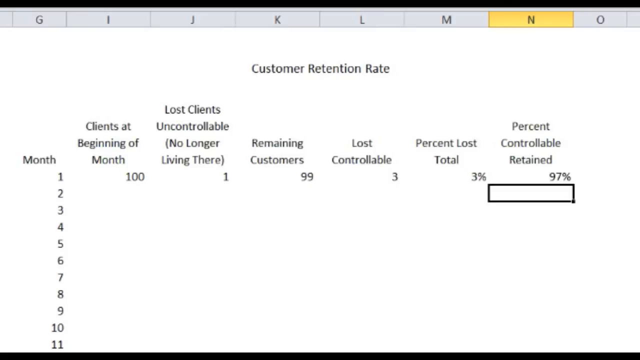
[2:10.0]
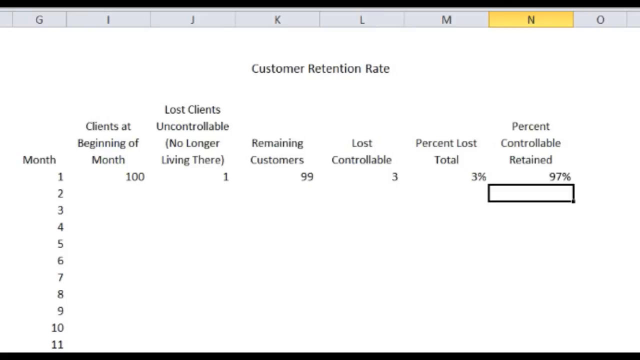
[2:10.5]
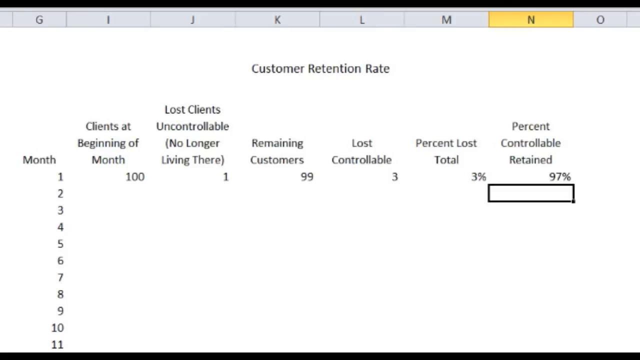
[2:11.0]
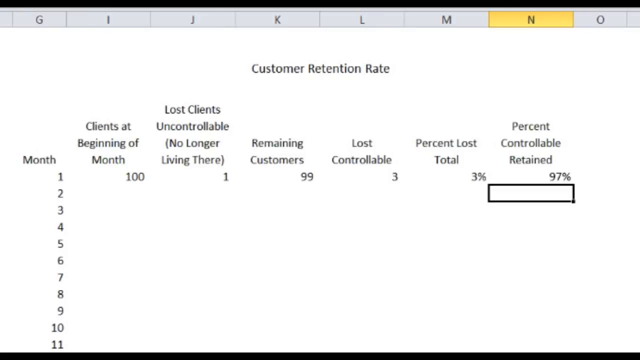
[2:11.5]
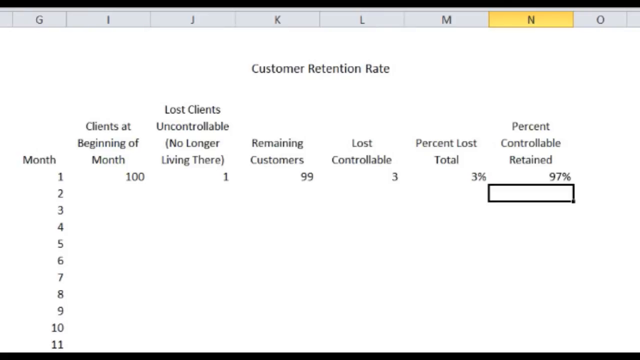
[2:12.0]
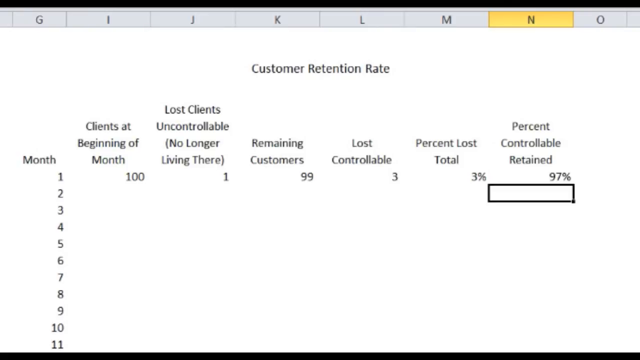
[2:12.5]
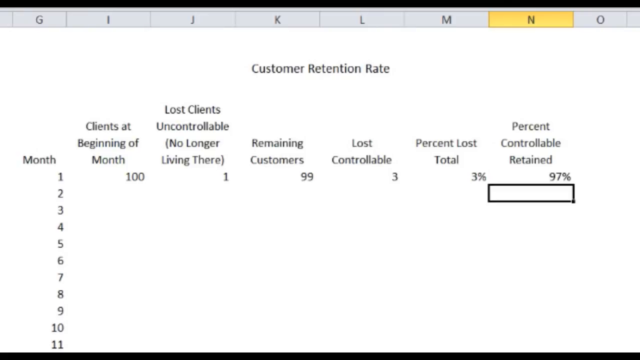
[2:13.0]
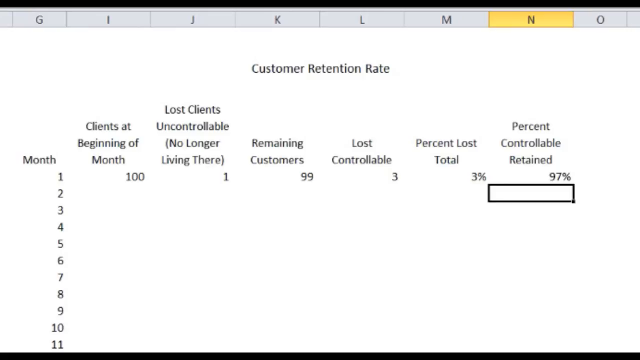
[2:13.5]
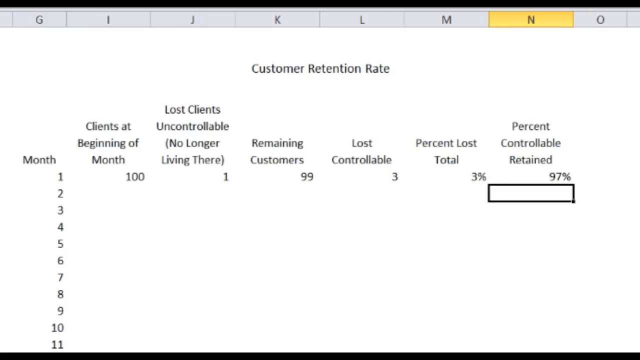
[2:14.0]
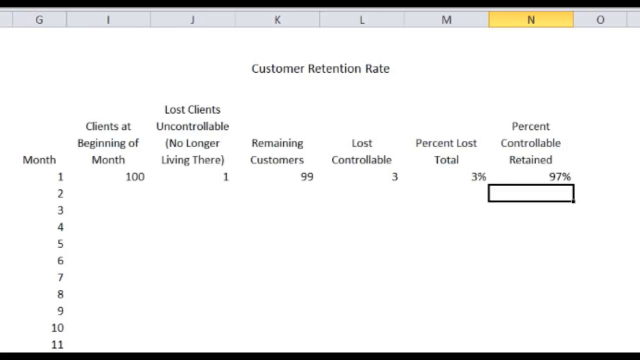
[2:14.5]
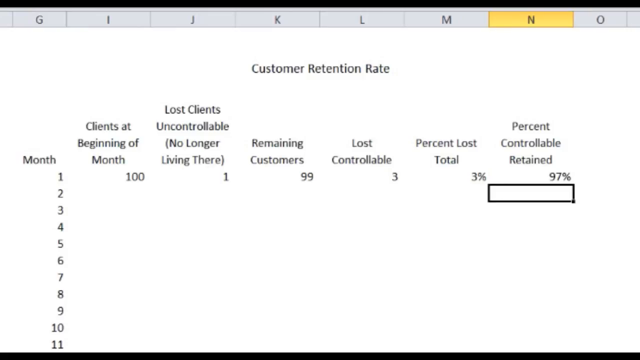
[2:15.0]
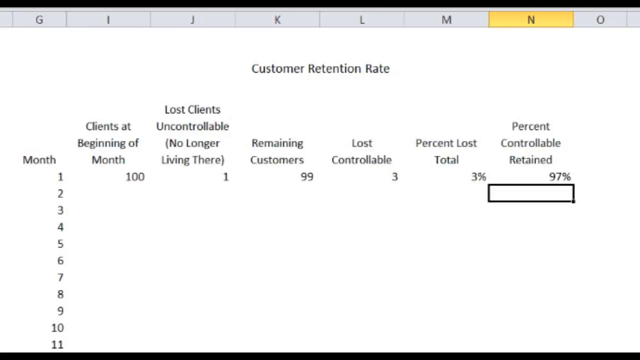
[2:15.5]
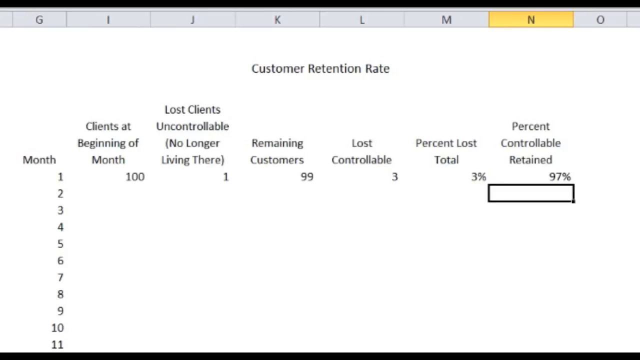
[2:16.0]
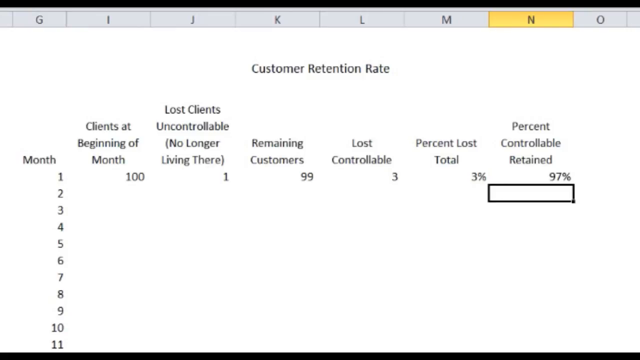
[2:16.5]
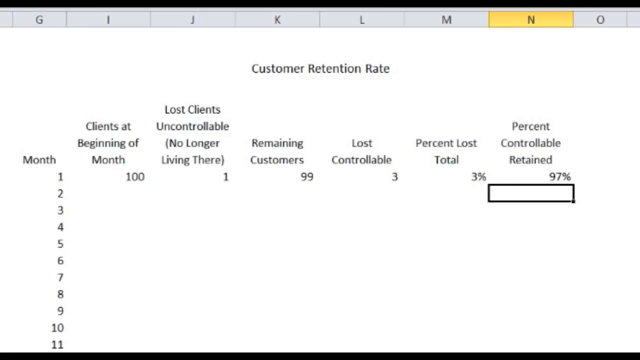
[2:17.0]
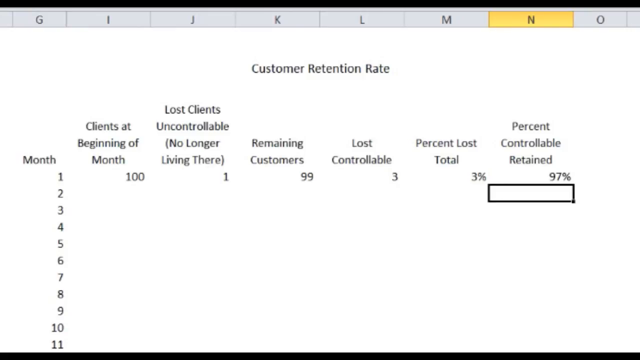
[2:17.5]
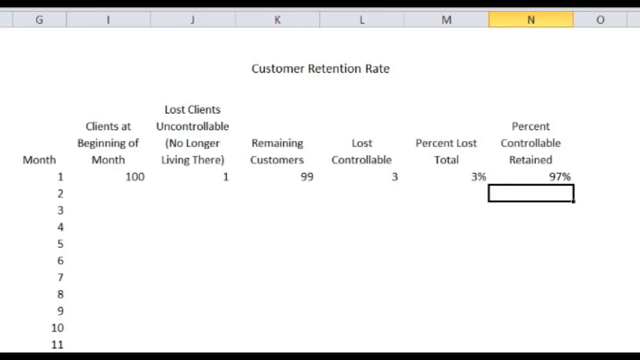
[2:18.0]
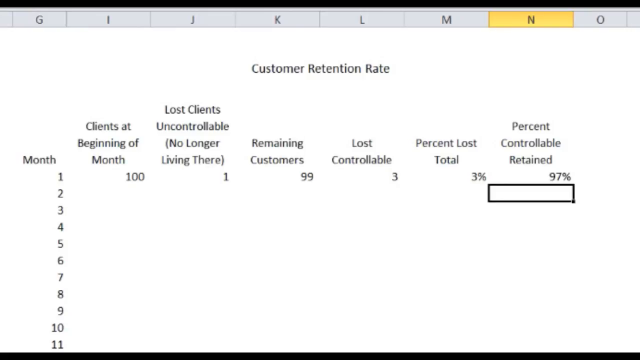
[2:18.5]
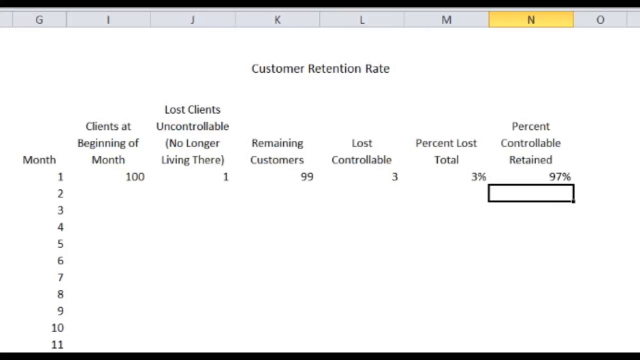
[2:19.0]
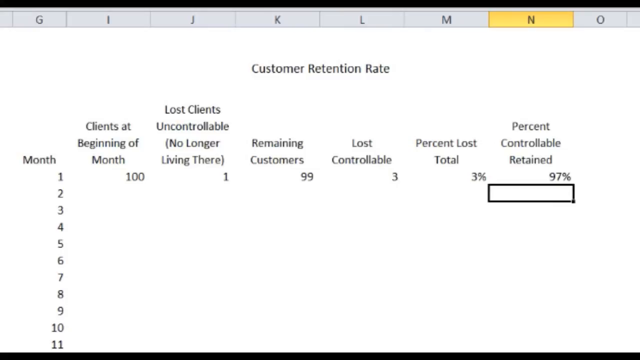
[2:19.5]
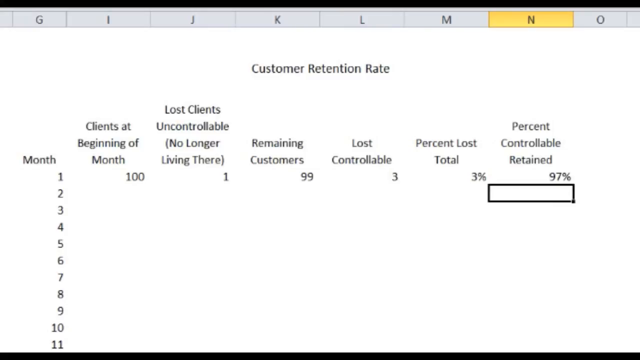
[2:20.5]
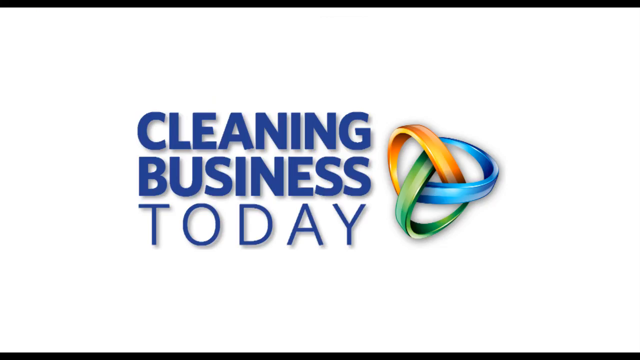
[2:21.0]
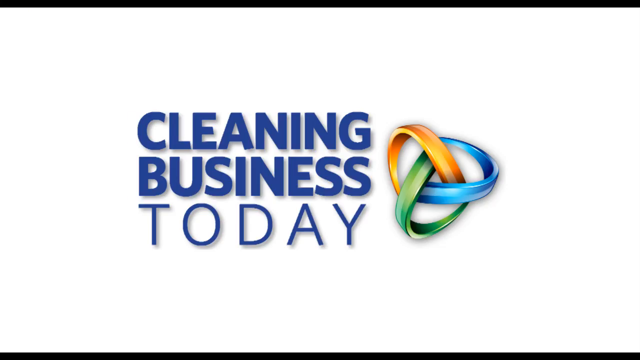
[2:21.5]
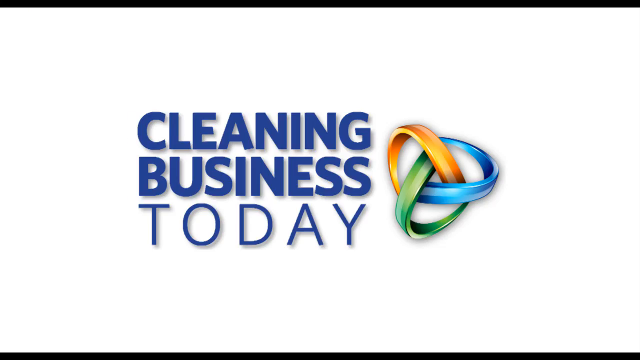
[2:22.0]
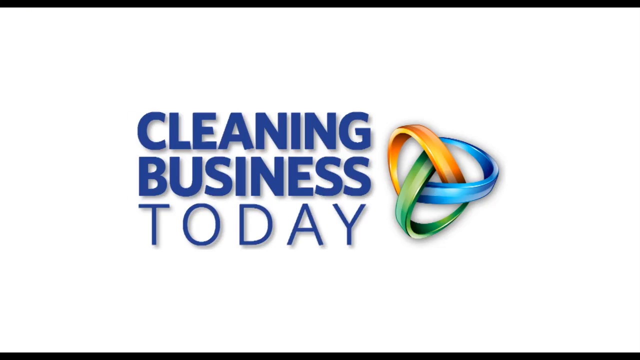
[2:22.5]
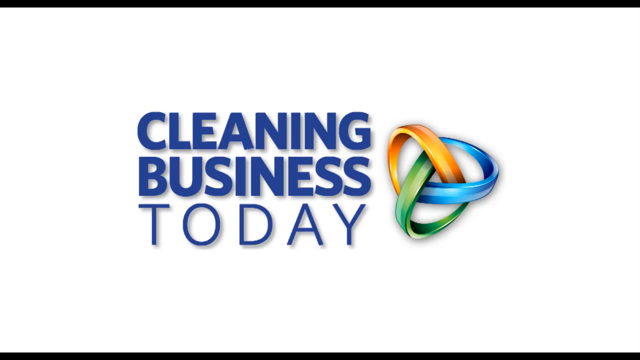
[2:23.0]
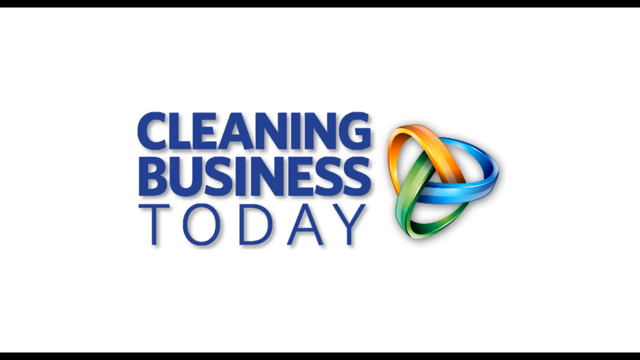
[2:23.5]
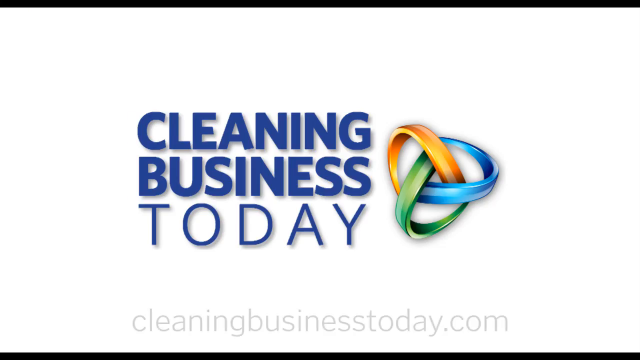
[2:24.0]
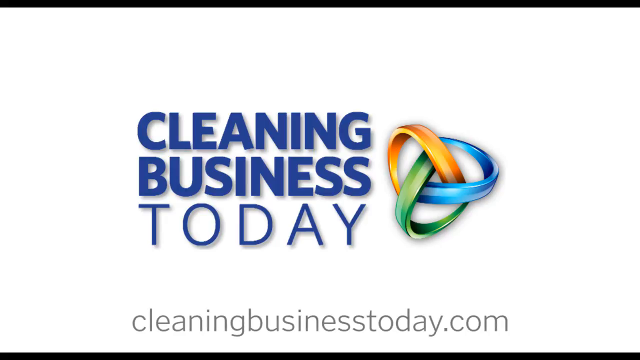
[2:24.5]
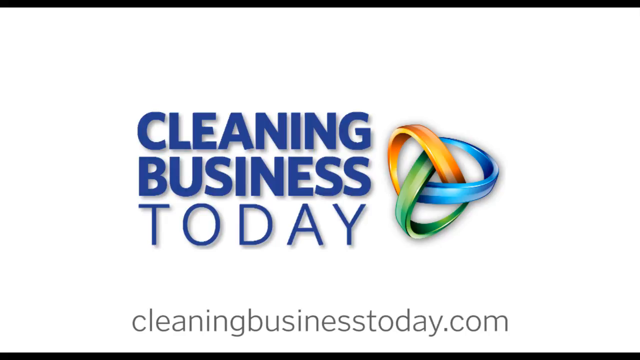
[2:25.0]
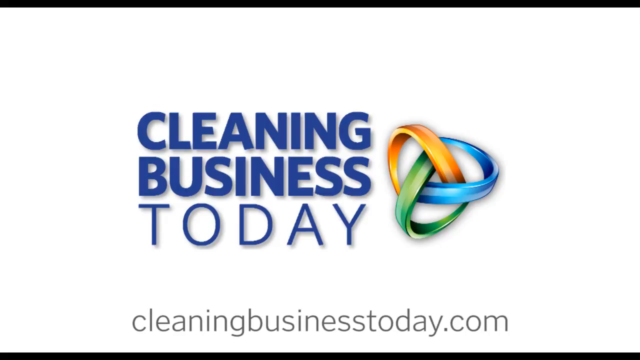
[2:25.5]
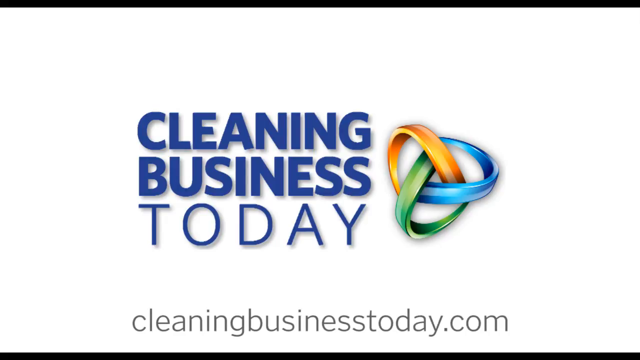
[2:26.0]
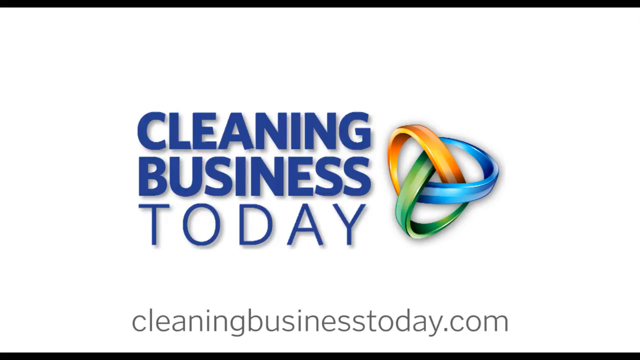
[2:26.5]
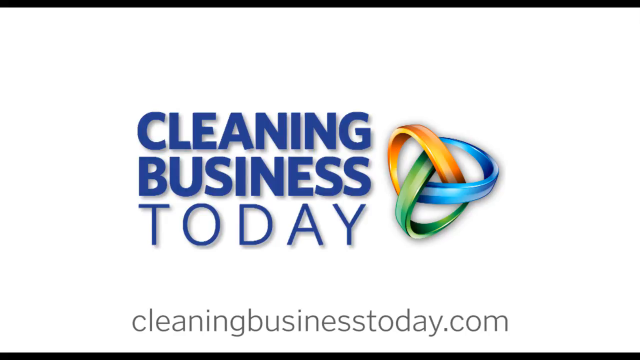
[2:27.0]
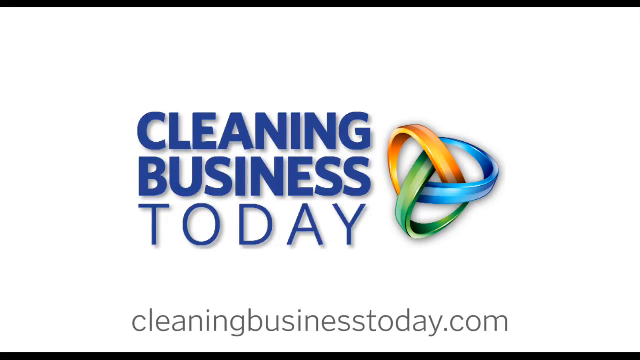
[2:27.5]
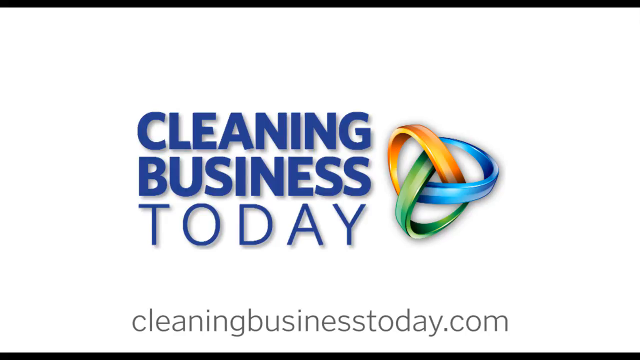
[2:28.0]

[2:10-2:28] An Excel sheet has the title "Customer retention rate" at the top with a number of columns underneath. The first column is "Month", with the months in ascending order. Next is "Clients at beginning of the month" with 100 prefilled, then "Lost clients uncontrollable (no longer living there)" with one prefilled underneath. The "Remaining customers" column is a formula of clients at the beginning of the month minus lost clients uncontrollable, 100 minus one, giving 99. The "Lost controllable" column has three prefilled, and the "Percent lost total" column has 3%, a formula dividing lost controllable by remaining customers, three divided by 99. The last column, "Percent controllable retained", holds a formula taking the negative of the percent lost total of 3% and adding 100 to it, which equals 97%; the formula for this column is being finished. The view then switches to a page with "Cleaning Business Today" in bold blue letters with the logo to the right of it, and the URL "cleaningbusinesstoday.com" pops up underneath.